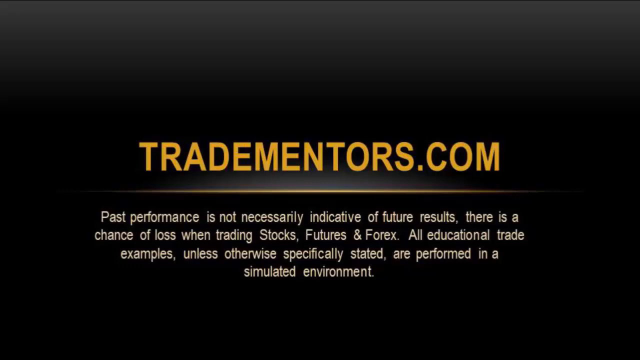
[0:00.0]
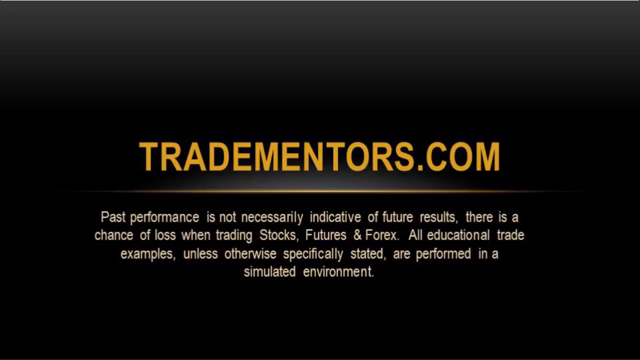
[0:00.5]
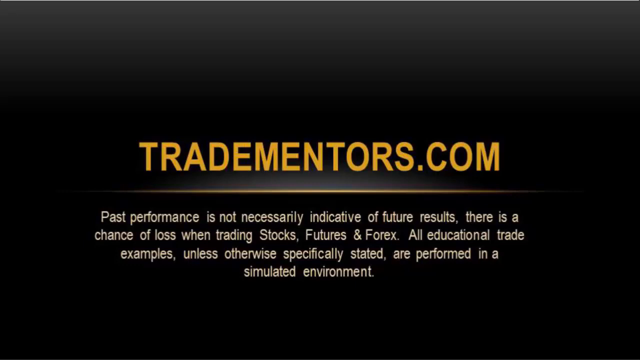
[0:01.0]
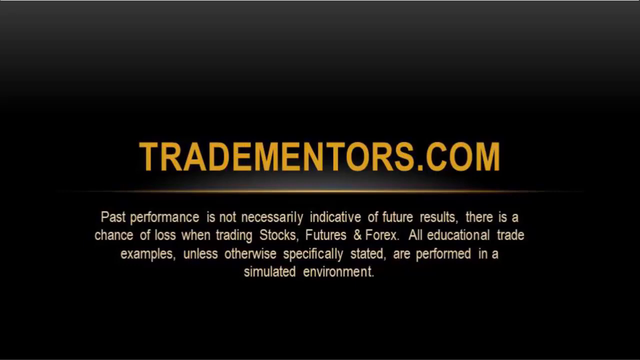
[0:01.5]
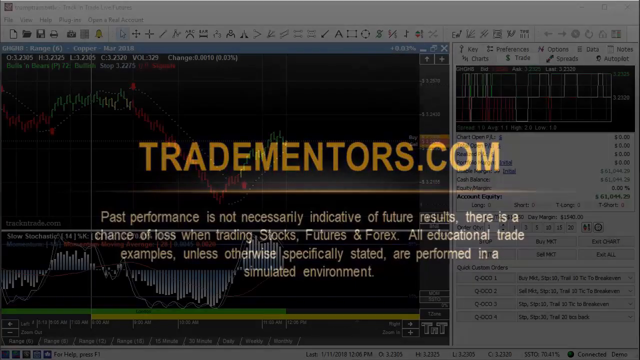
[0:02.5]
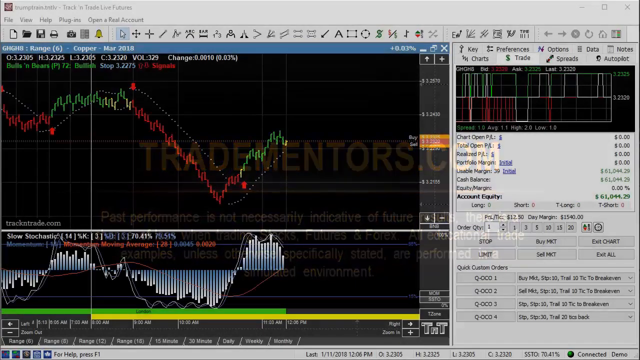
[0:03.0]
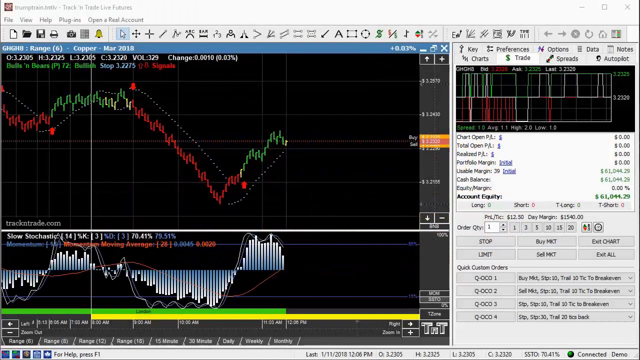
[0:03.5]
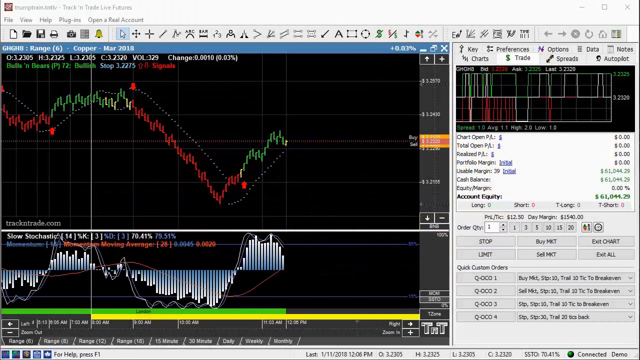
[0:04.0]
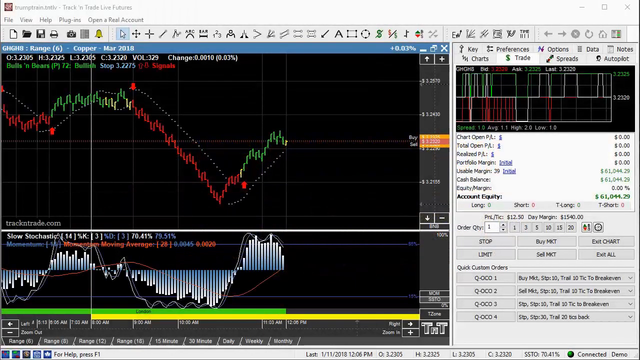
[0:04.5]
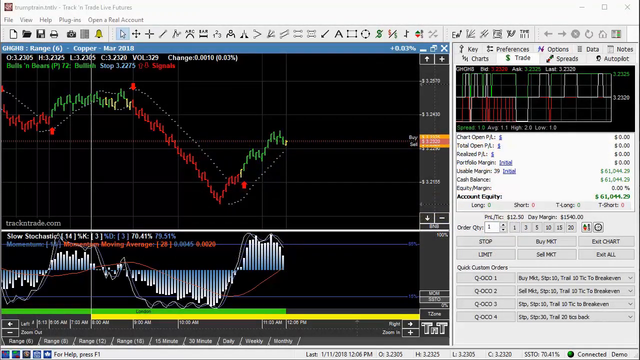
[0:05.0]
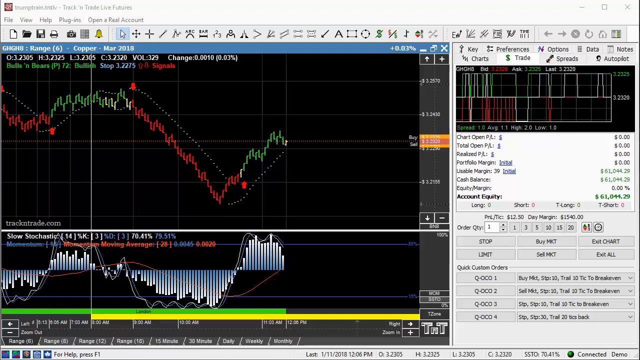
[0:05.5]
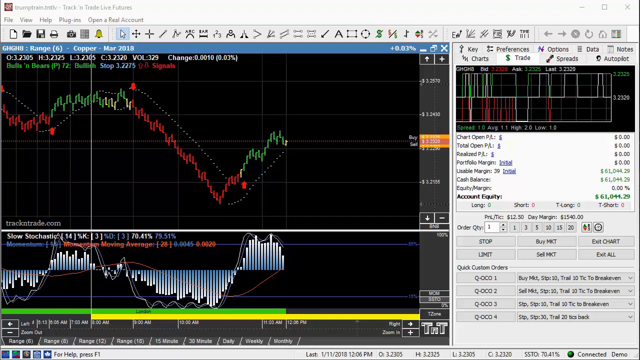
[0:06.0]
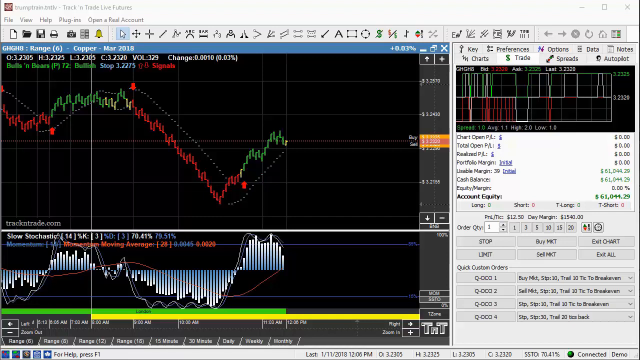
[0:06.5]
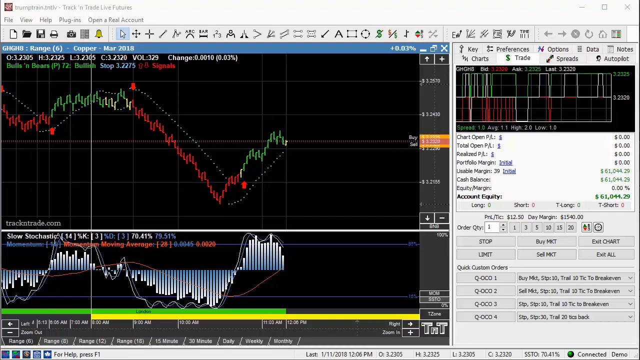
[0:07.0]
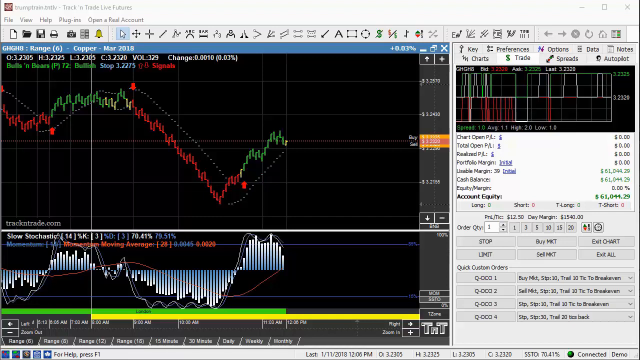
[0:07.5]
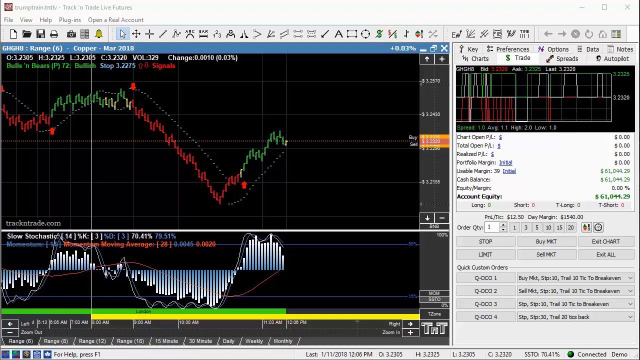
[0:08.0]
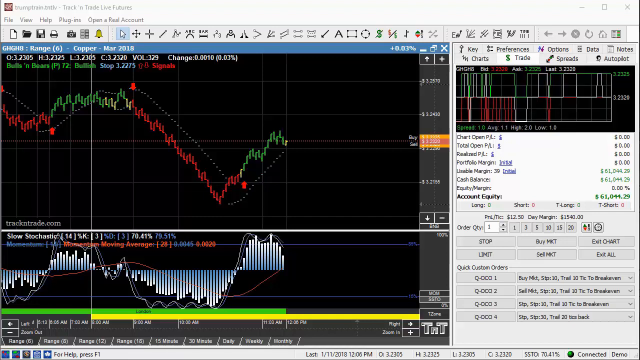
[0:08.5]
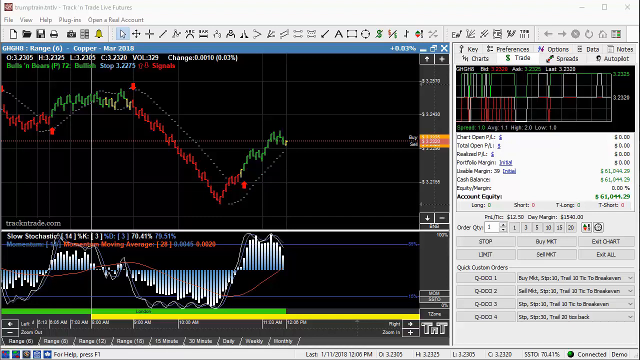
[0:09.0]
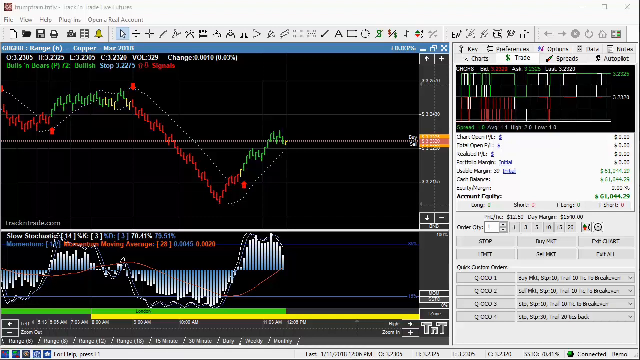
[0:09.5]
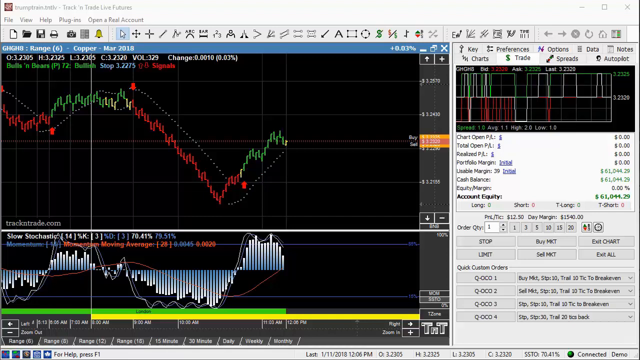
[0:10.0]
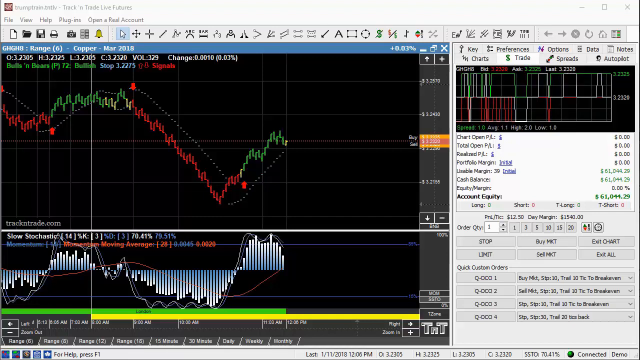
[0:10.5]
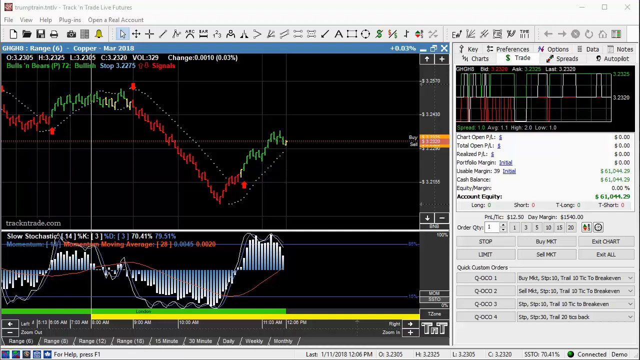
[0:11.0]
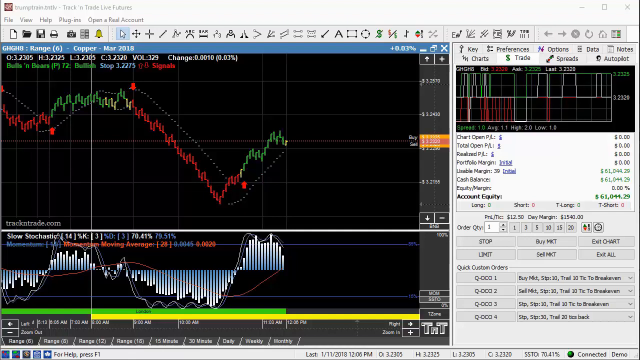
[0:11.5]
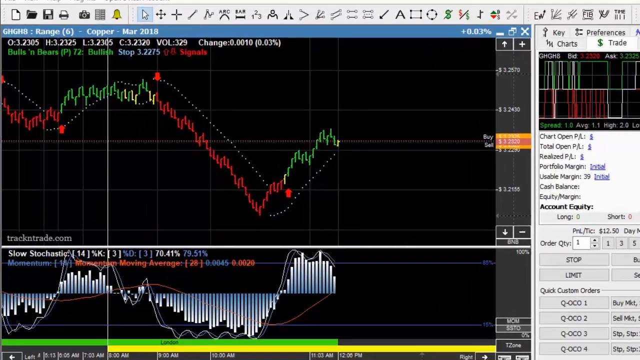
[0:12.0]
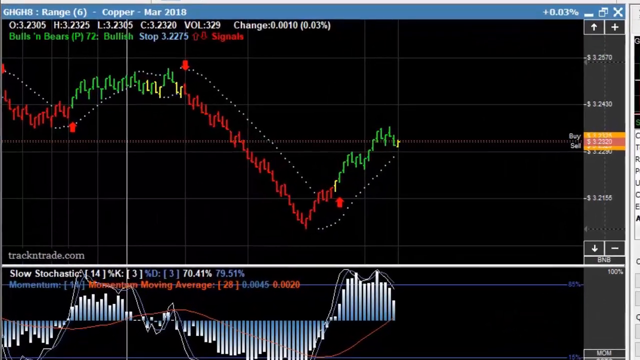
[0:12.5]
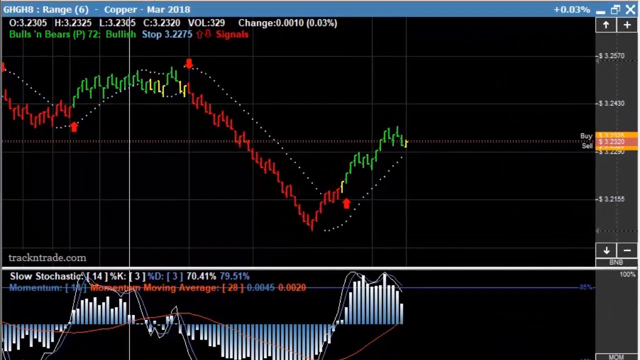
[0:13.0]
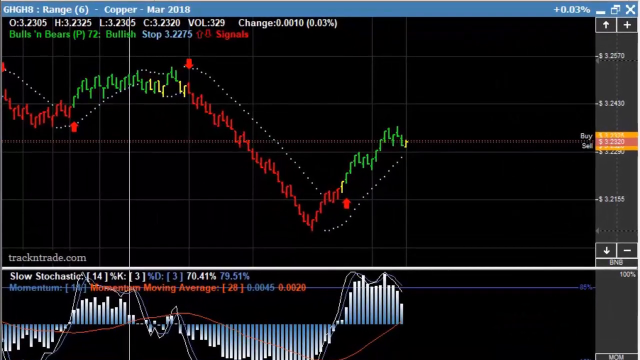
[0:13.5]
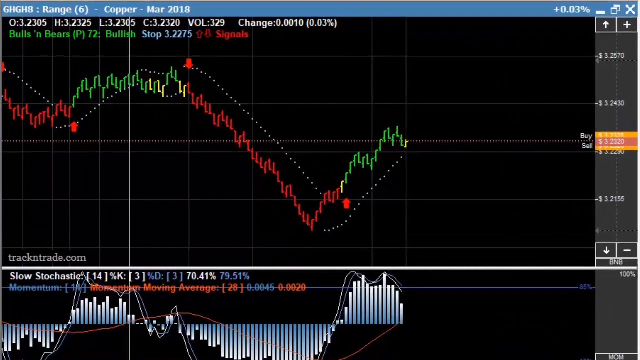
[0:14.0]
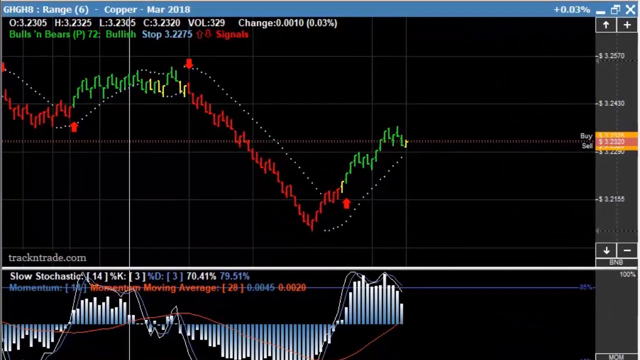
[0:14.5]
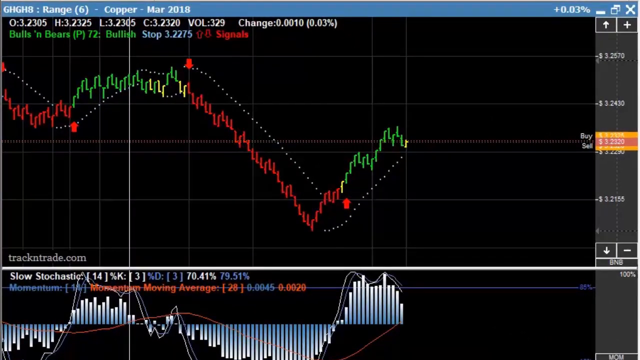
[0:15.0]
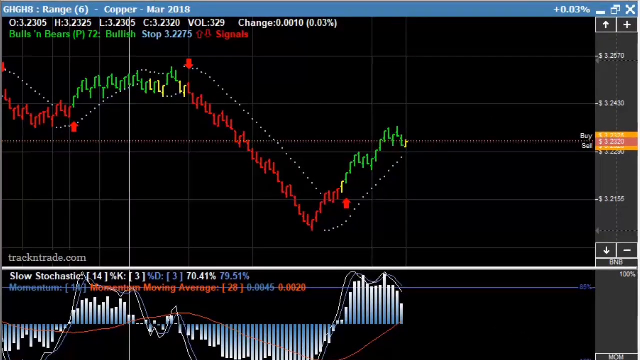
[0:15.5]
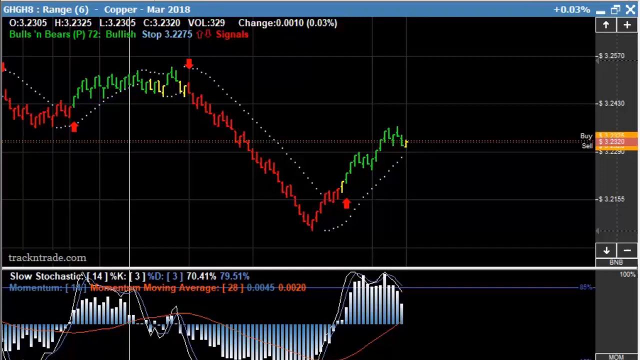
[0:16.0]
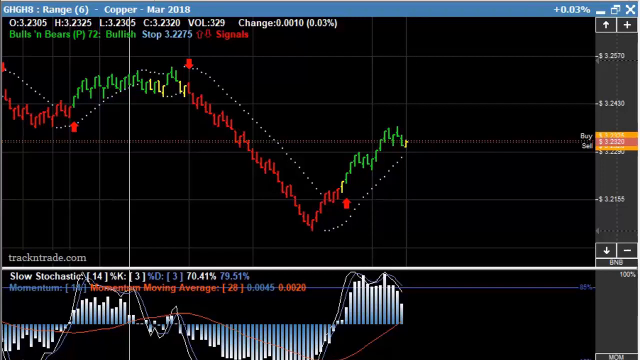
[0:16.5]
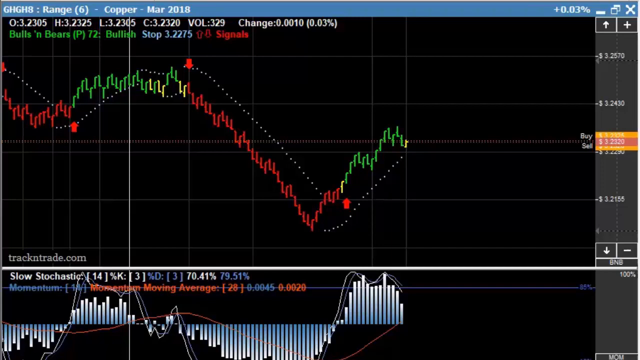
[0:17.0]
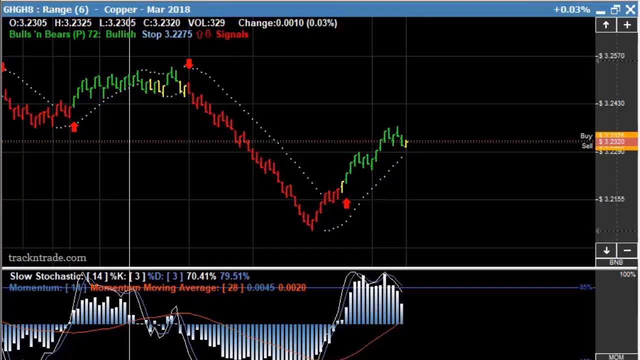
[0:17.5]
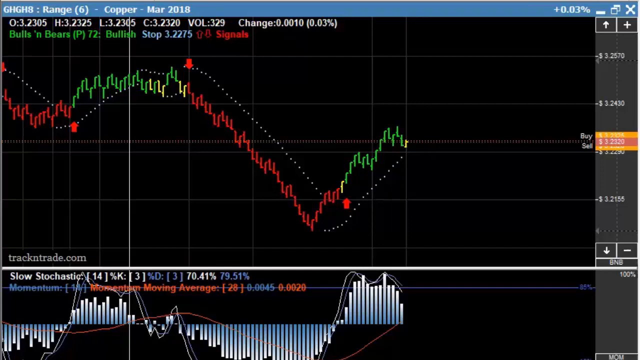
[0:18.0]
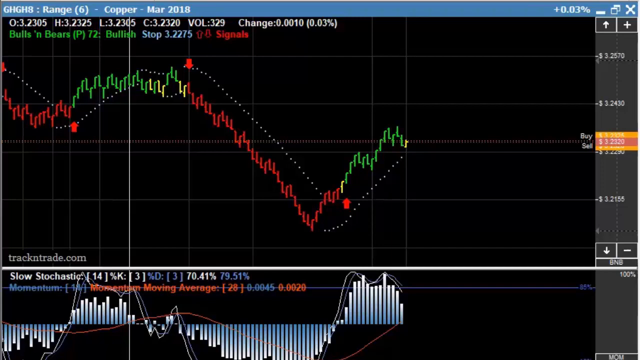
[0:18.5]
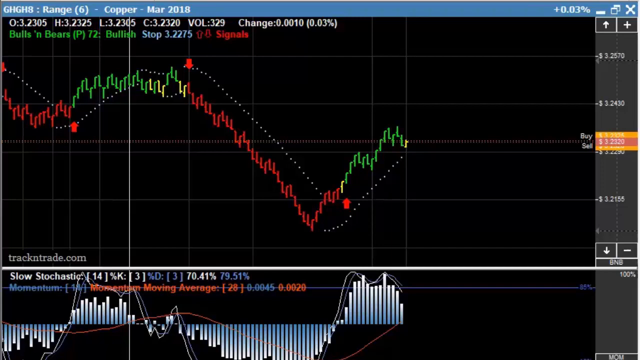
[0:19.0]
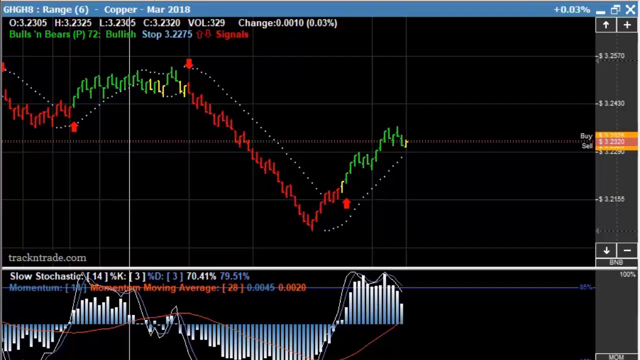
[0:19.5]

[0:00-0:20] A black screen shows "tradementors.com" in orange font in the middle. A fuzzy bright orange line runs underneath it, and below that, center-justified white text reads "past performance is not necessarily indicative of future results. There is a chance of loss when trading stocks, futures, and forex. All educational trade examples, unless otherwise specifically stated, are performed in a simulated environment." The text stays on screen until it fades out and shifts to an open computer program window showing a trading graph, justified to the left and in the center of the screen. The graph trends down in red, up in green, sharply down in red, and then up in red until it continues up in green. Below it is a wave graph in silver, blue, and white that follows the trend line of the wins and losses graph above. The camera then zooms in closer on the trade graph and results.